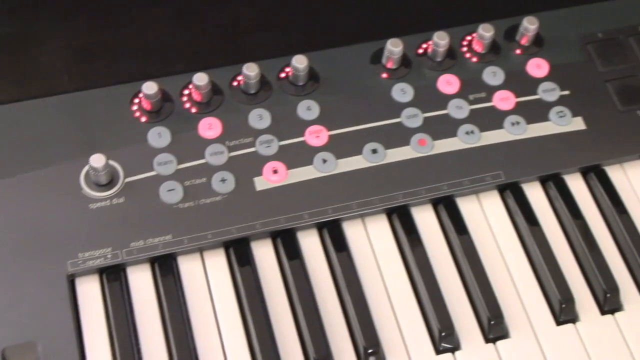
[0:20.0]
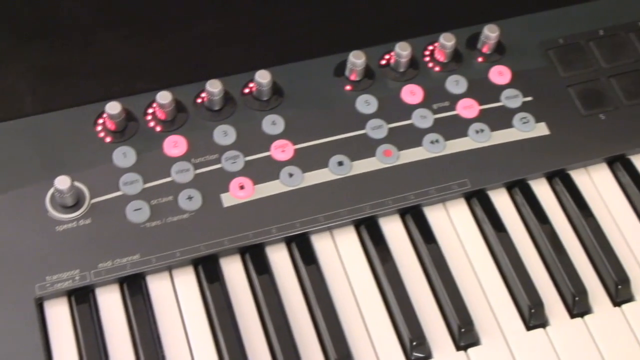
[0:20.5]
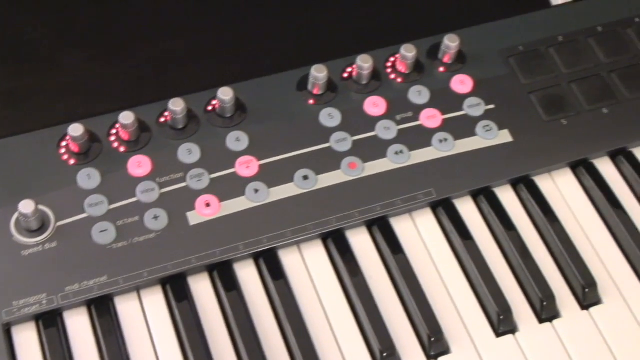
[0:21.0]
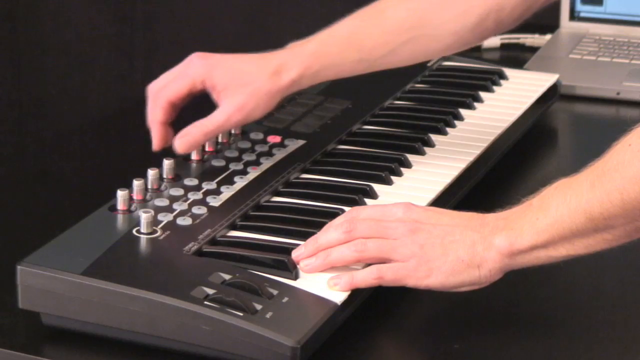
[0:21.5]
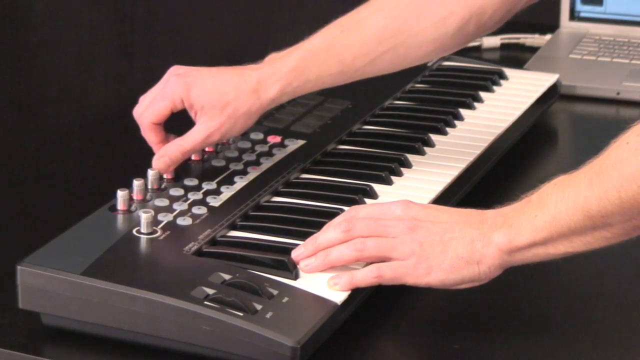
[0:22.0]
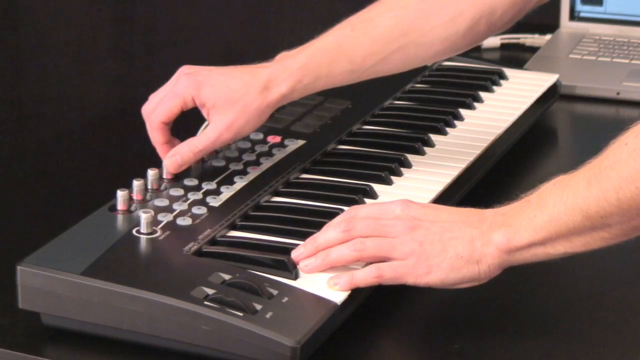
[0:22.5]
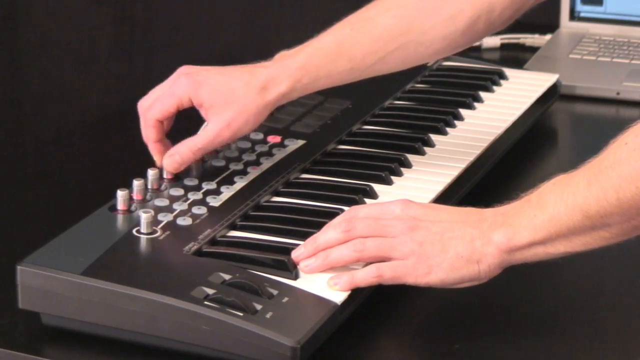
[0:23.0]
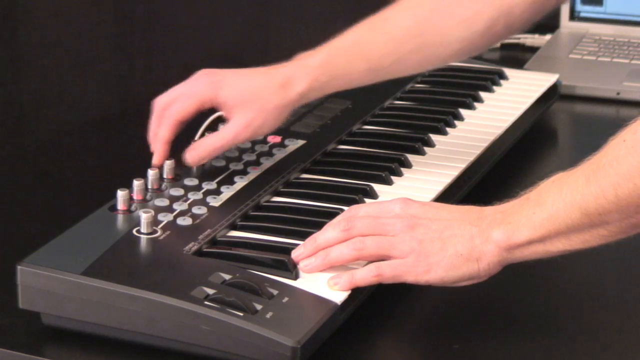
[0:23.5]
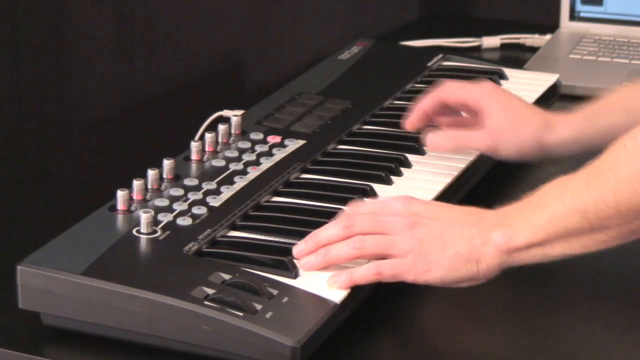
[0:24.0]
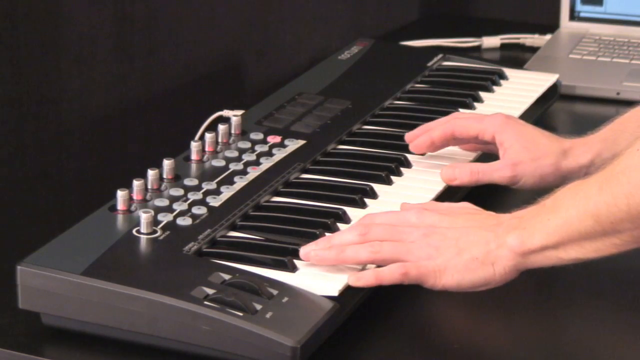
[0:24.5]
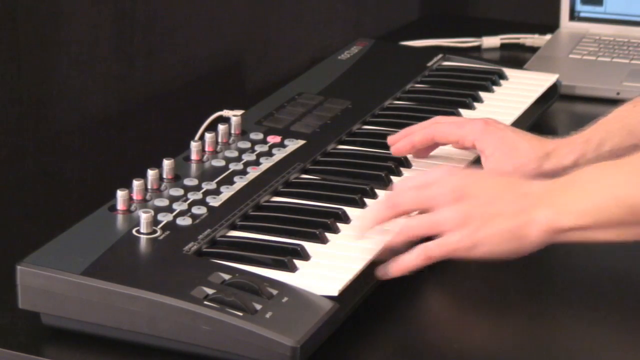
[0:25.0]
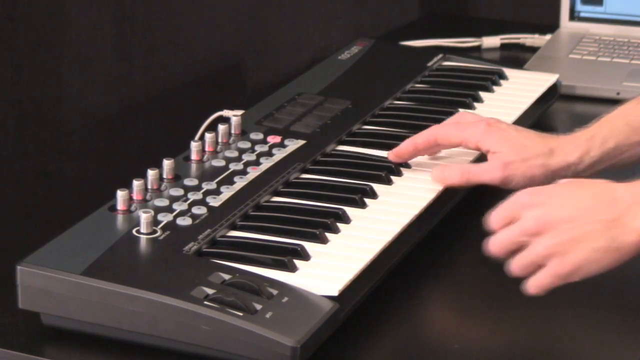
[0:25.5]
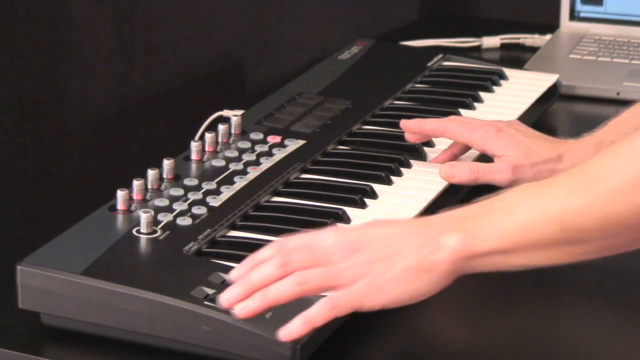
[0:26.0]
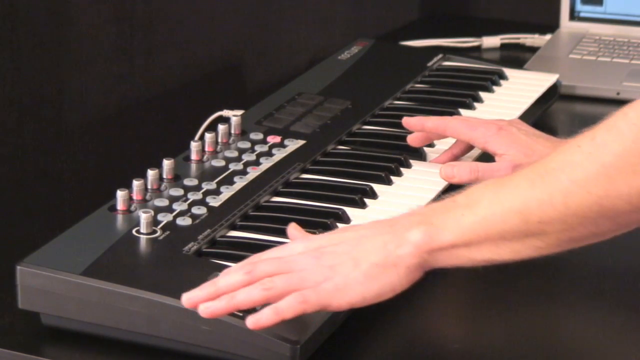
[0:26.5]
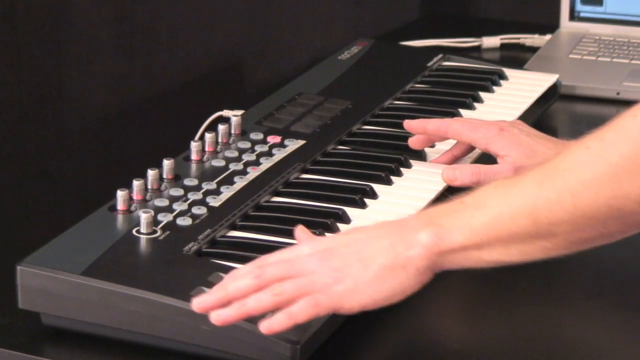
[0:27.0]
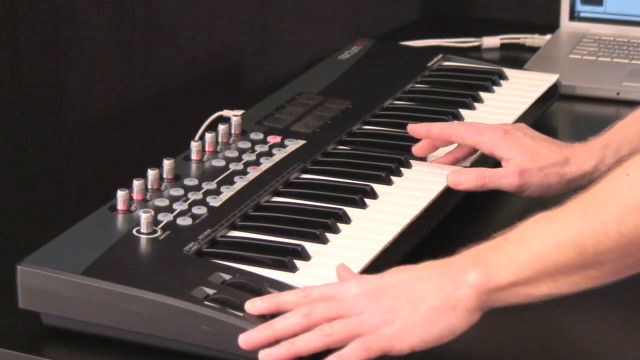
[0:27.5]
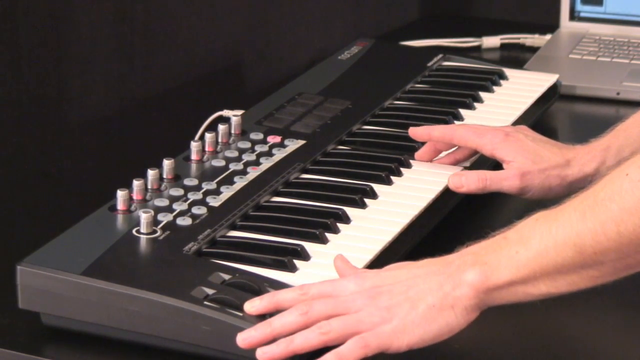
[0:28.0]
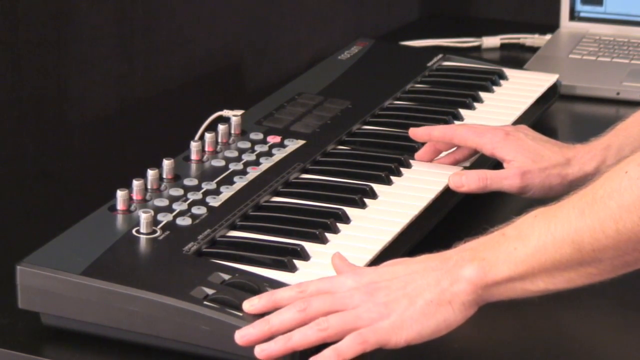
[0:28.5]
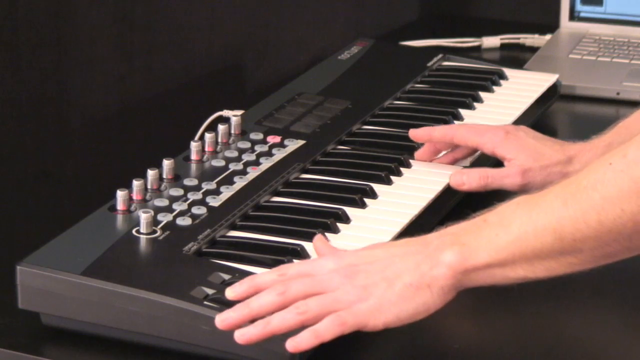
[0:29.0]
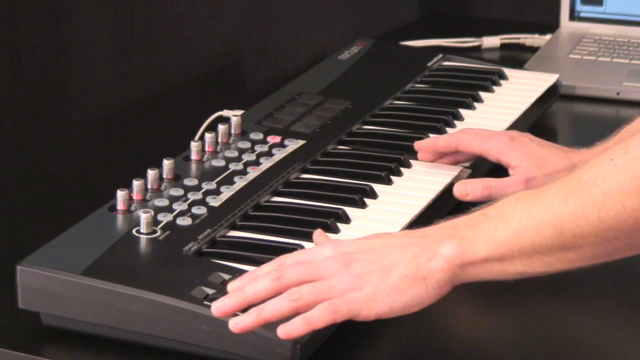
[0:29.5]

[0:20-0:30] A close-up shows a keyboard as the camera scans over the top of it. A person adjusts one of the rotary dials, the fourth dial along the top left-hand side, then uses his fingers to play several keys. He reaches across with his left hand and uses a wheel on the left-hand side of the keyboard to make adjustments. Just beyond the keyboard, a silver laptop sits on the same desk, with what looks like a USB cable coming out of it that seems to plug into the back of the keyboard. The keyboard is predominantly black with a stripe of grey along the top, and the man plays it, sitting on top of a black table surface. Beyond that there seems to be a black curtain in the room behind them.